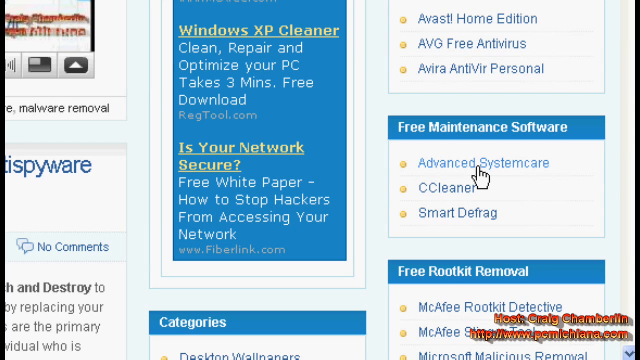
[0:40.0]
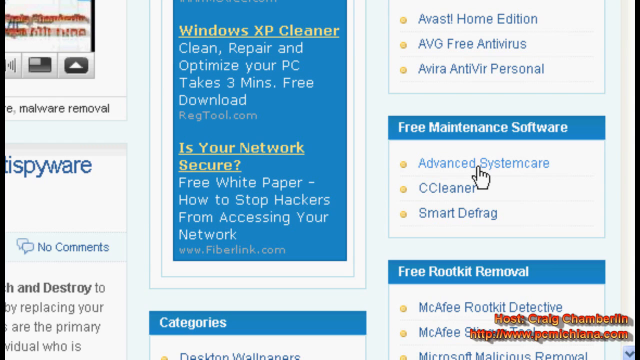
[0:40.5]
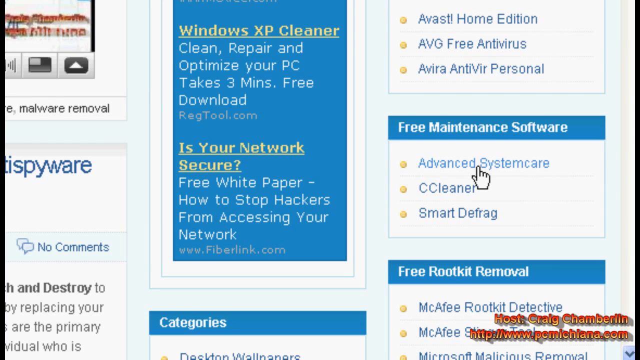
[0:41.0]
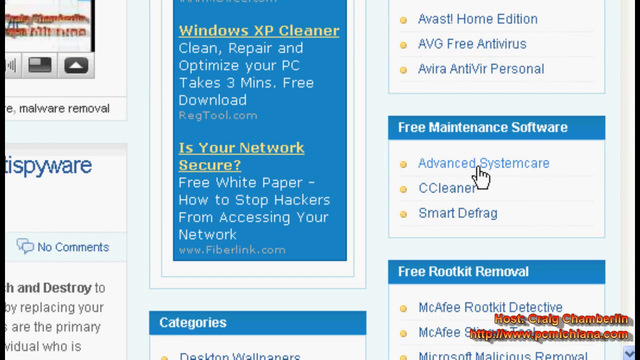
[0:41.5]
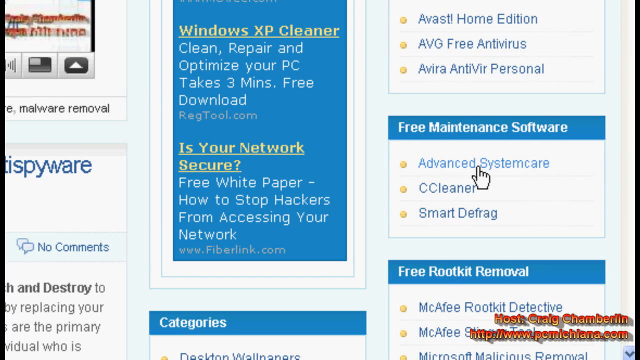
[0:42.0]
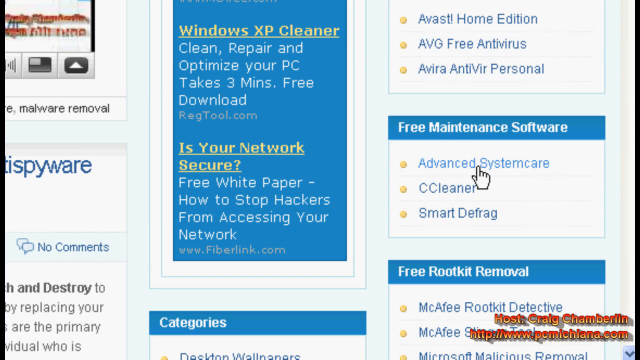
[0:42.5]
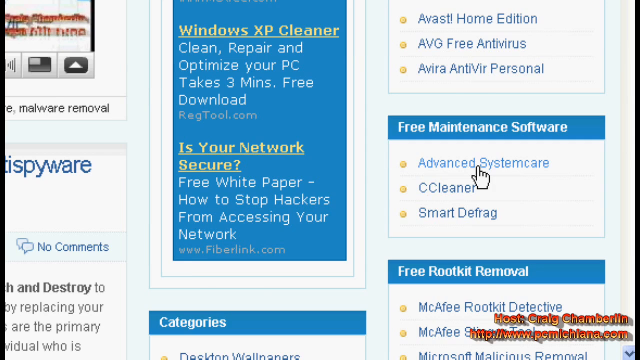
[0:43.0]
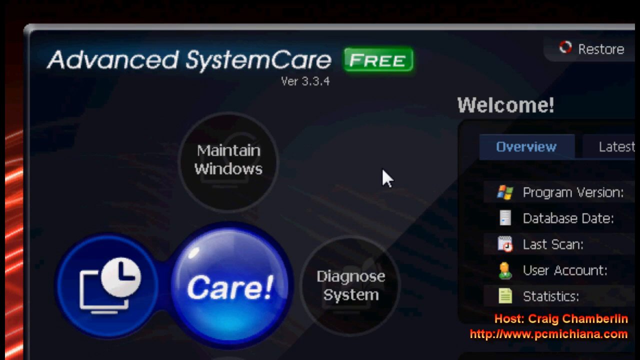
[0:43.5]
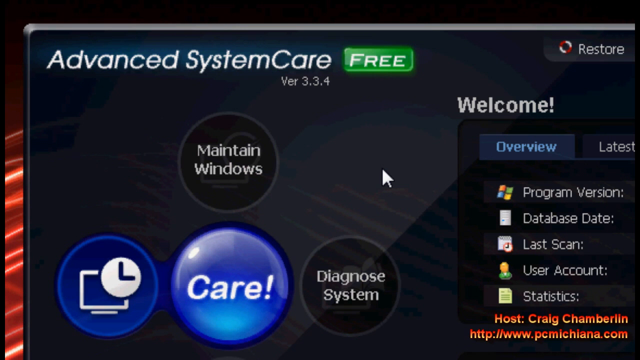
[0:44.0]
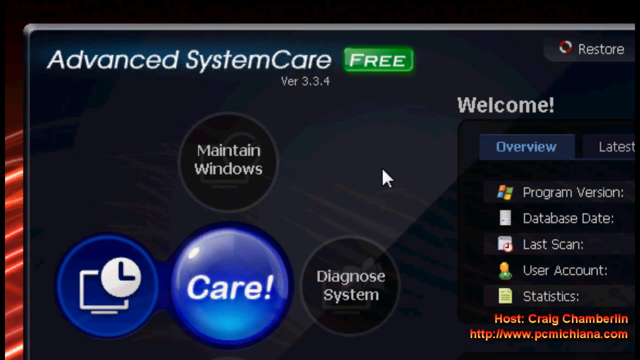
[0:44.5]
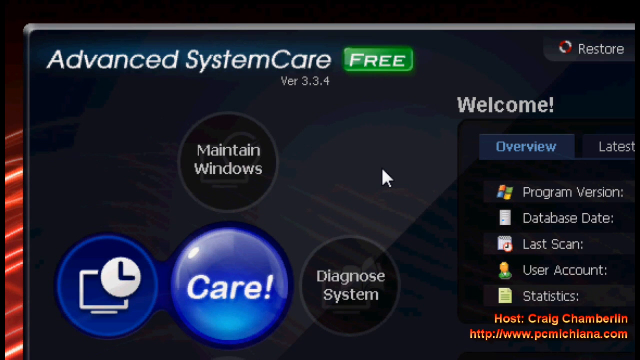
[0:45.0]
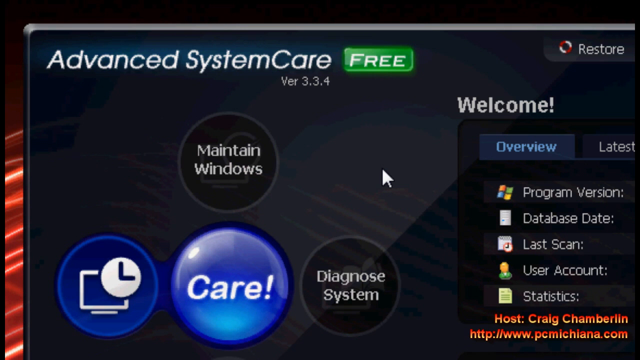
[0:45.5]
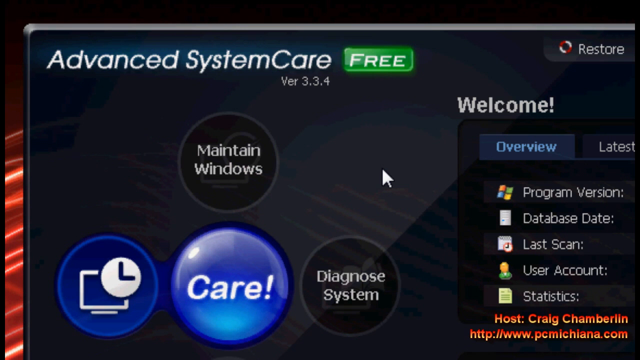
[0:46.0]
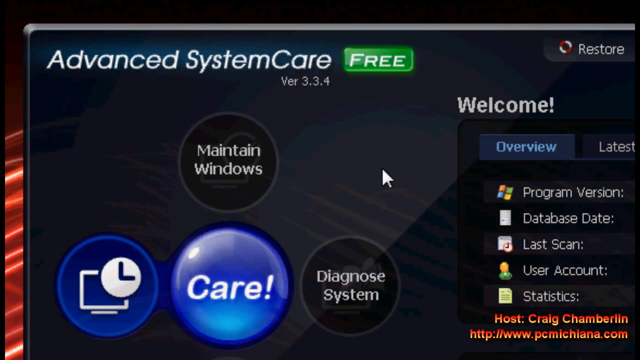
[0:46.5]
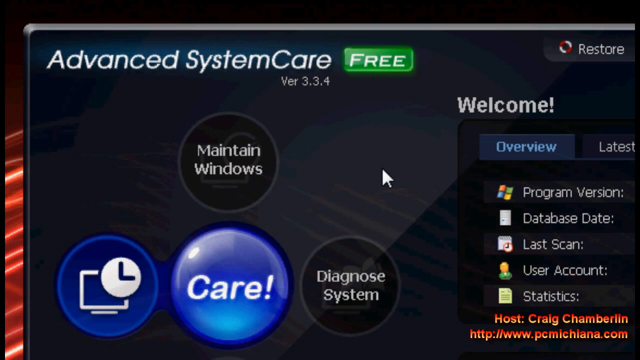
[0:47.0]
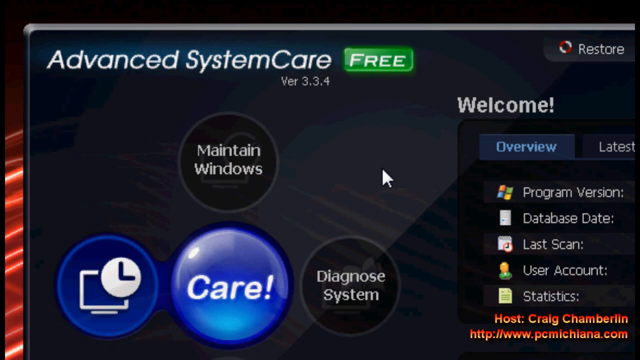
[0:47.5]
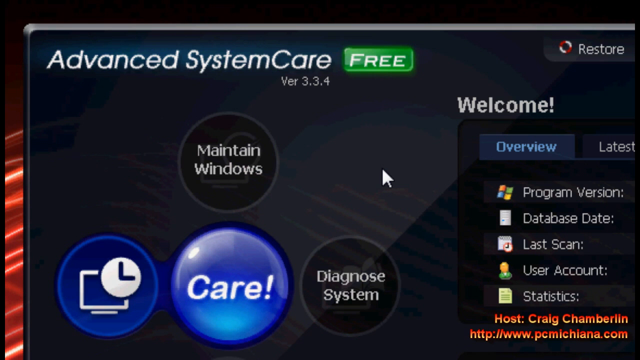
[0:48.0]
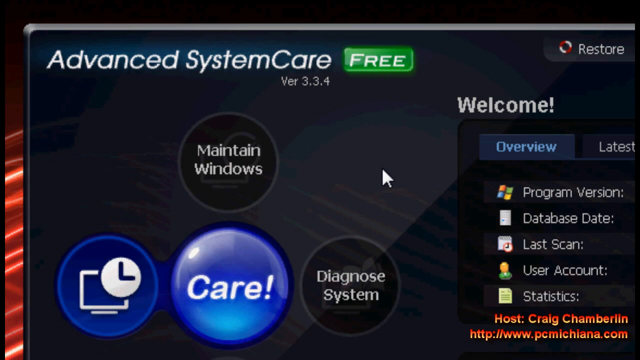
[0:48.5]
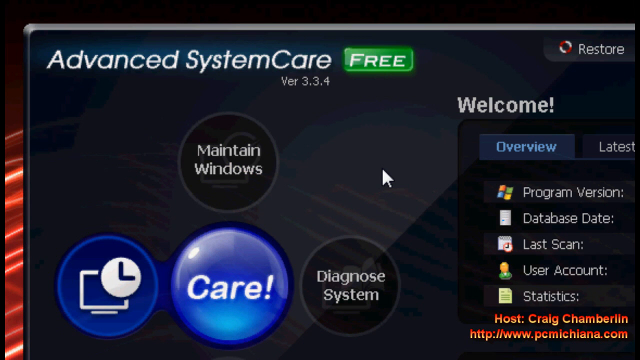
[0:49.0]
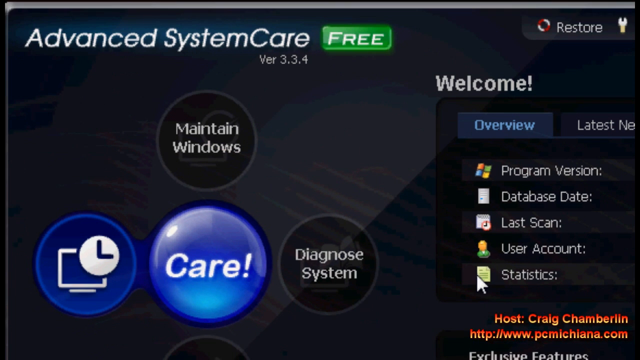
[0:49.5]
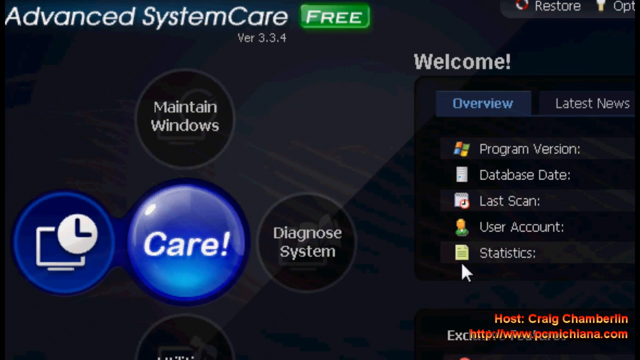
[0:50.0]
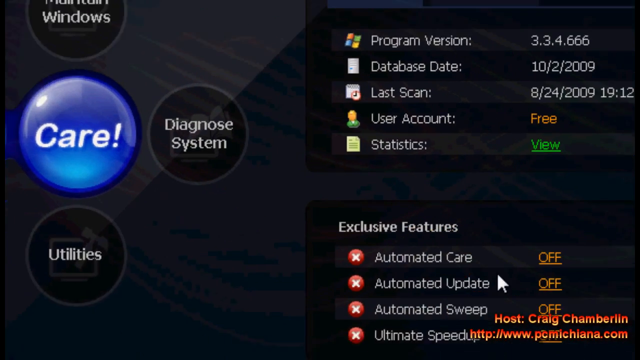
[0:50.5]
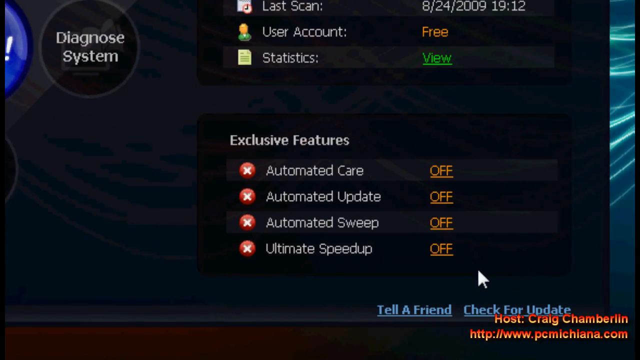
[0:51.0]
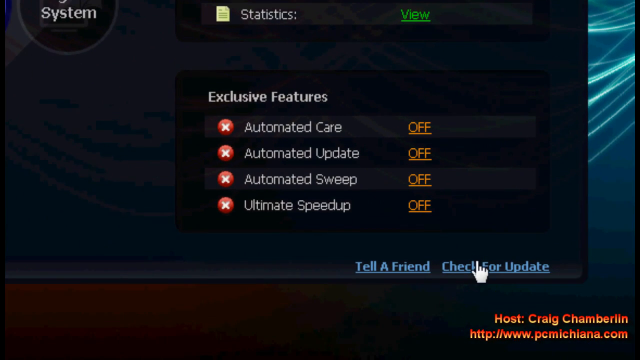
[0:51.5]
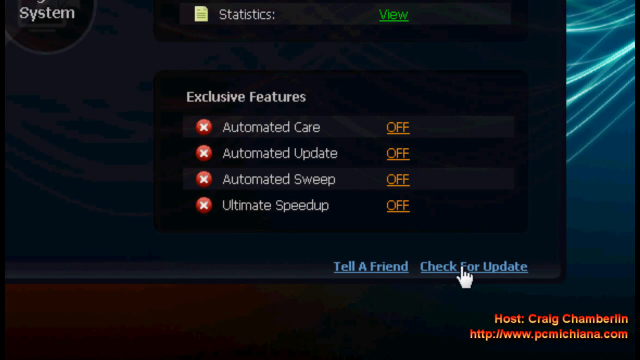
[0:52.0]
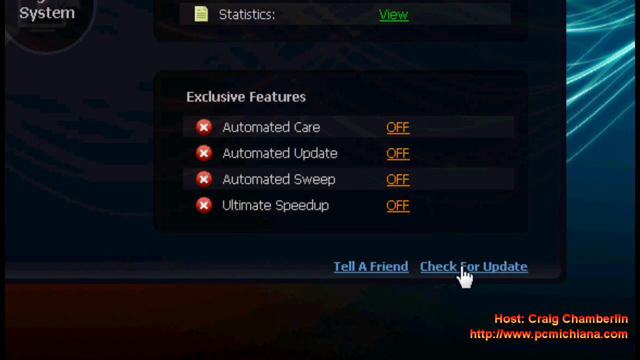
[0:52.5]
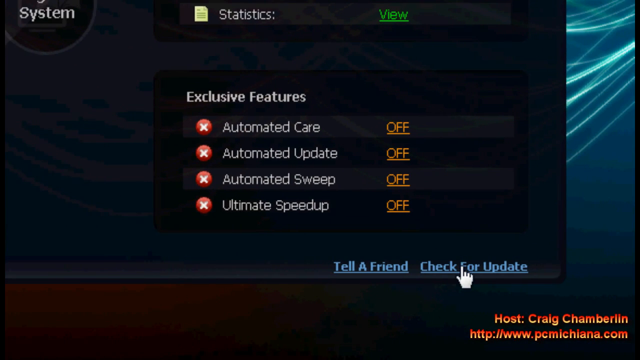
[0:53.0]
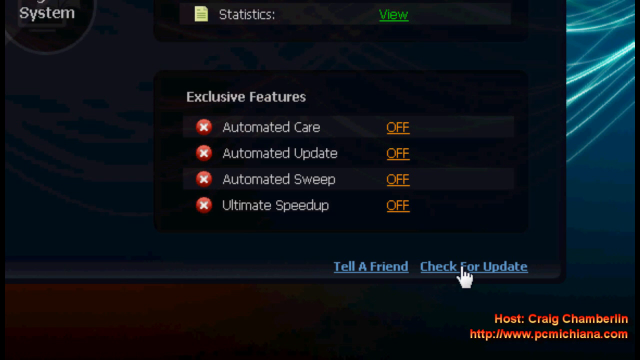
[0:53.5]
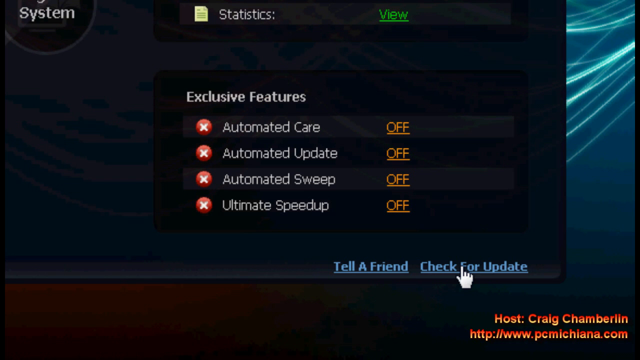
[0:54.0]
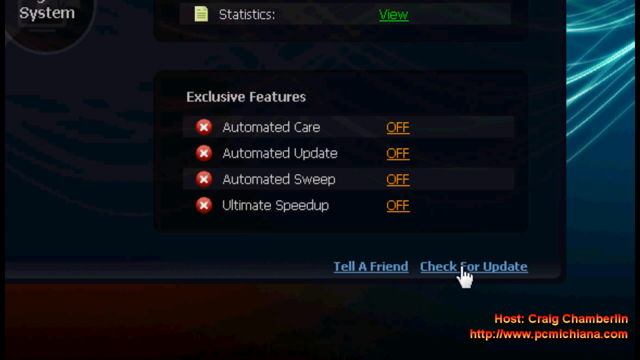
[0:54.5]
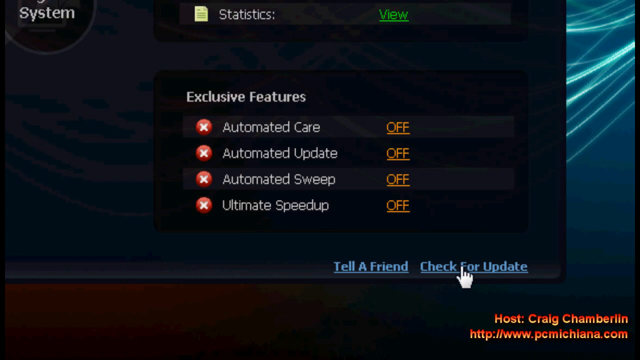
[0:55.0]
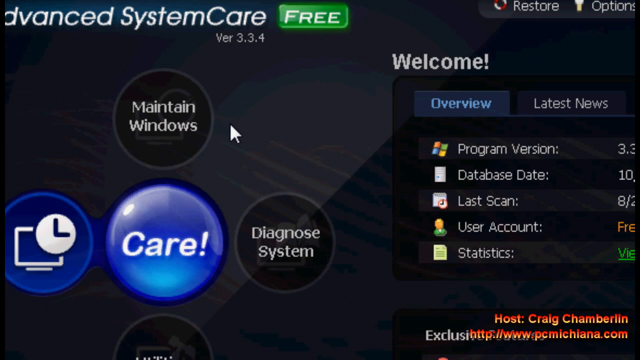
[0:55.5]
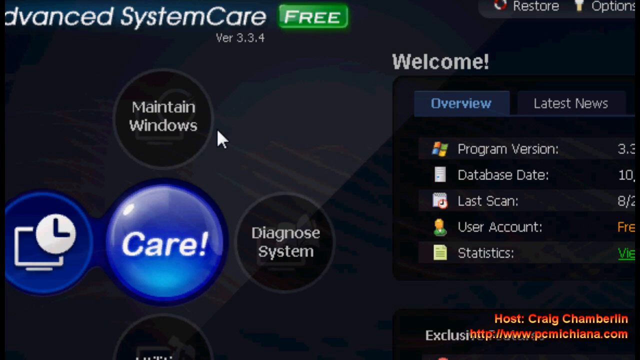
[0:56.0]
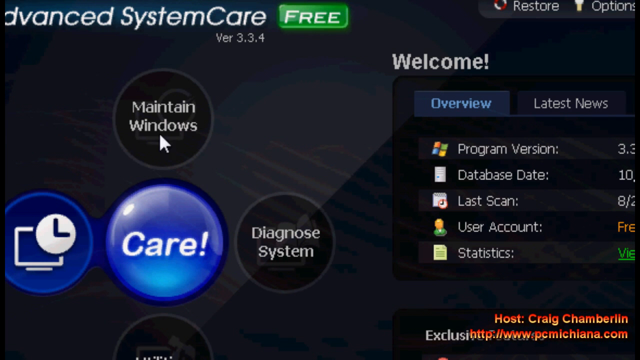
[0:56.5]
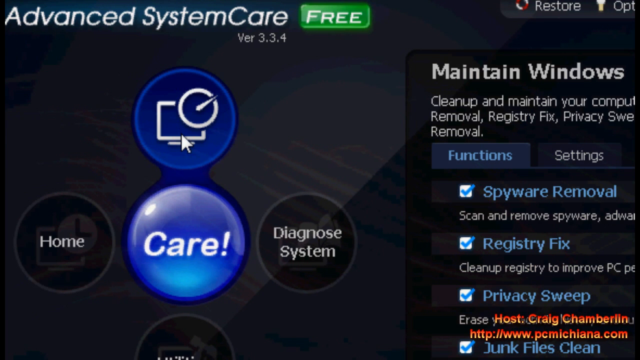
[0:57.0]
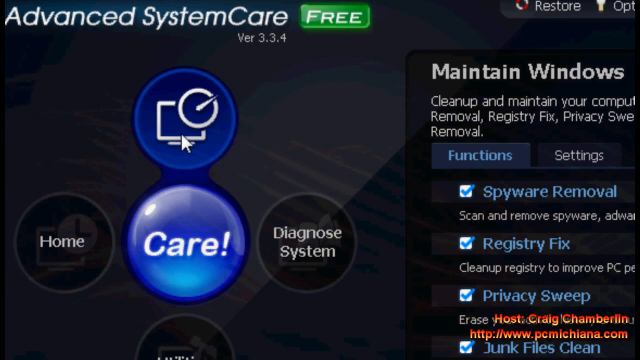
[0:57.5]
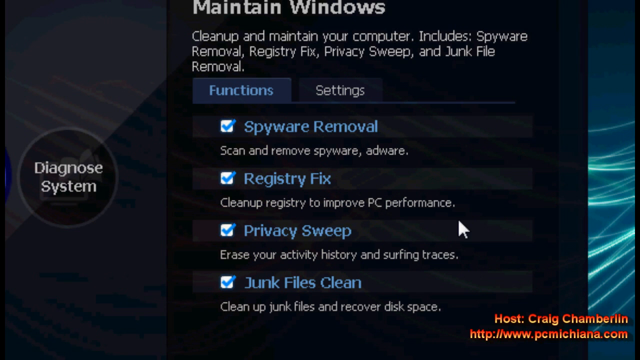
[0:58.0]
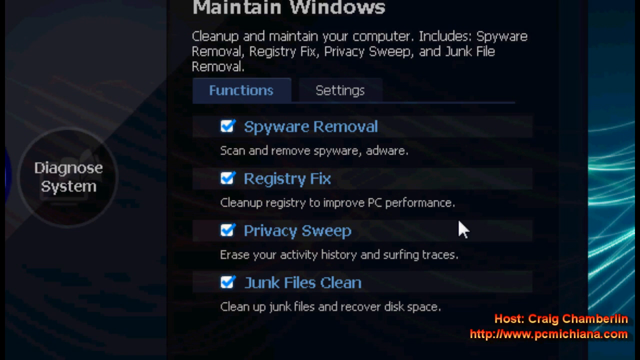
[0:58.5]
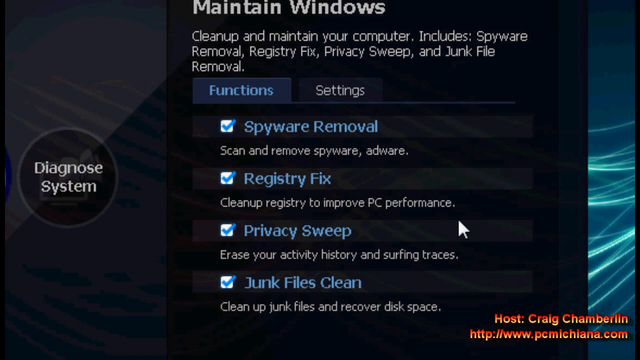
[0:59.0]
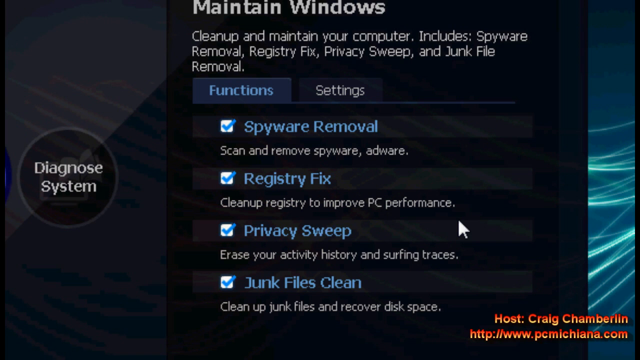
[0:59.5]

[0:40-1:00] On the web page, the cursor, shown as a finger pointer, is placed on "advanced system care," located in a box with white lettering labeled "free maintenance software." A couple of other boxes include a free rootkit removal and a Windows XP cleaner, with text about cleaning, repairing, and optimizing a personal computer, taking three minutes, and downloading it free. Yellow bold text asks "is your network secure." The view then moves into Advanced System Care, which opens a download page with a highlighted green button indicating it is free and the word "welcome." Over to the right is an overview listing the program version, the database, the last scan, the user accounts, and statistics, with options to diagnose the system.